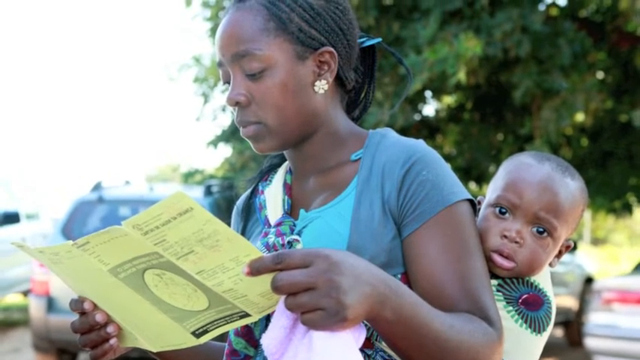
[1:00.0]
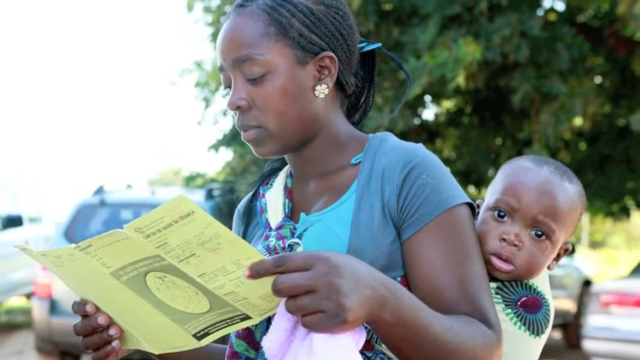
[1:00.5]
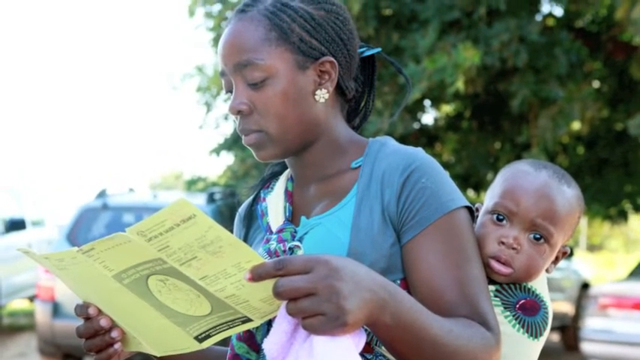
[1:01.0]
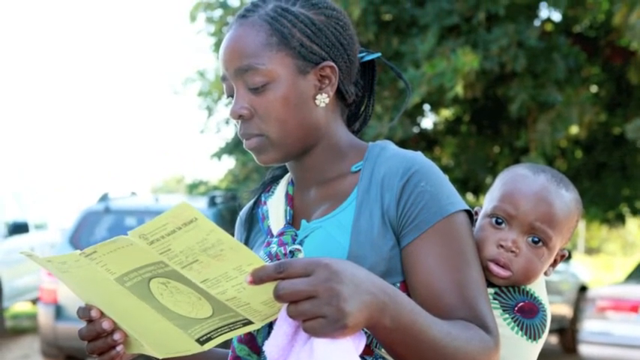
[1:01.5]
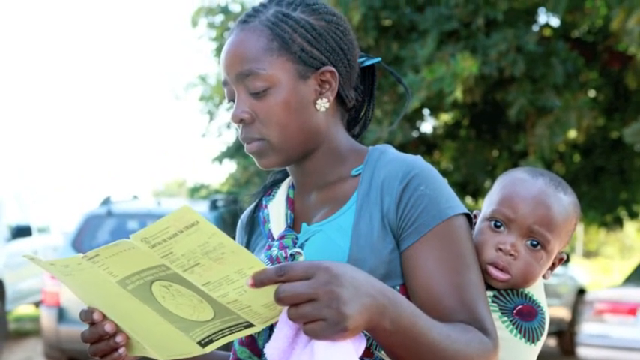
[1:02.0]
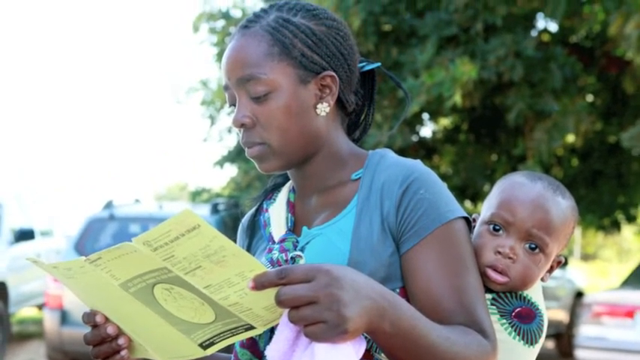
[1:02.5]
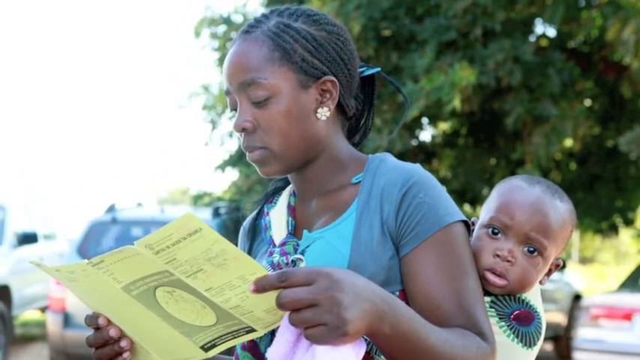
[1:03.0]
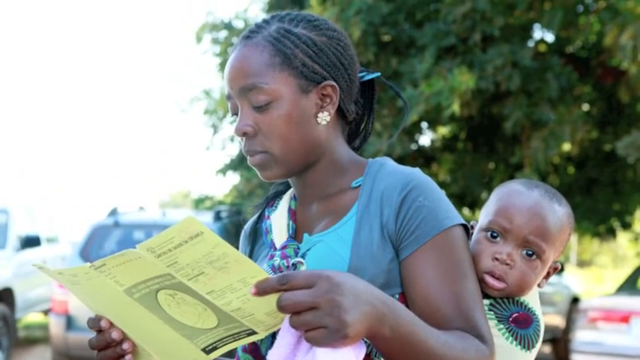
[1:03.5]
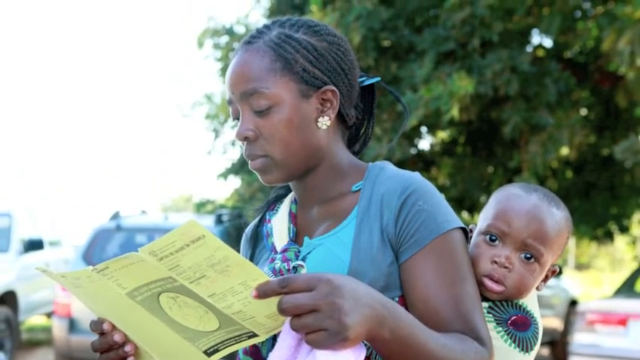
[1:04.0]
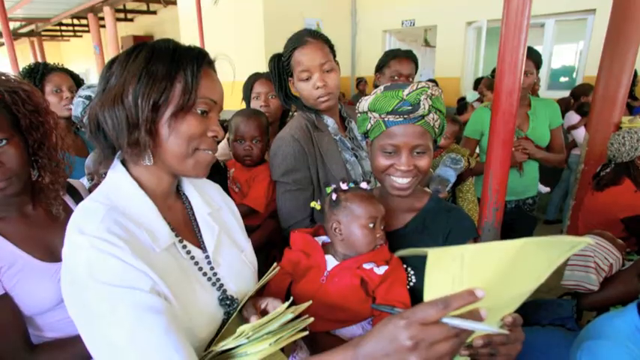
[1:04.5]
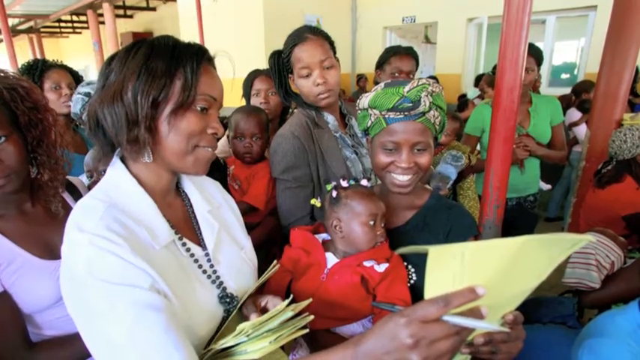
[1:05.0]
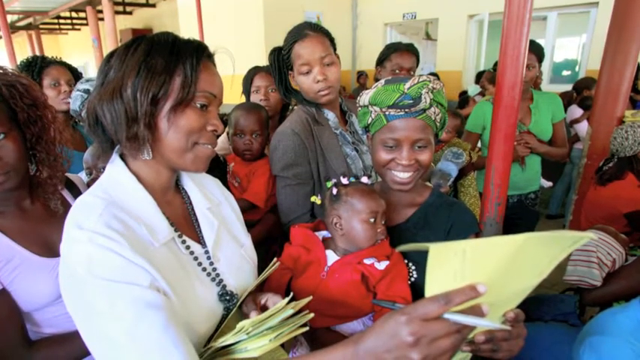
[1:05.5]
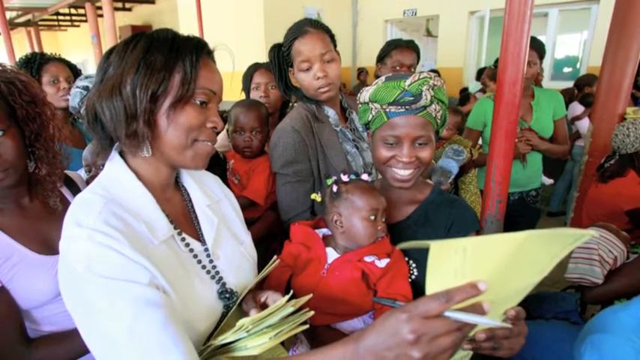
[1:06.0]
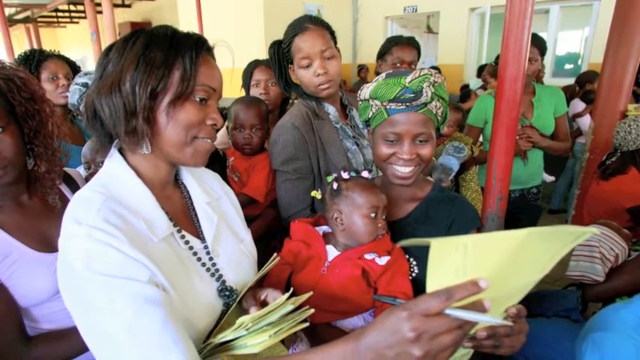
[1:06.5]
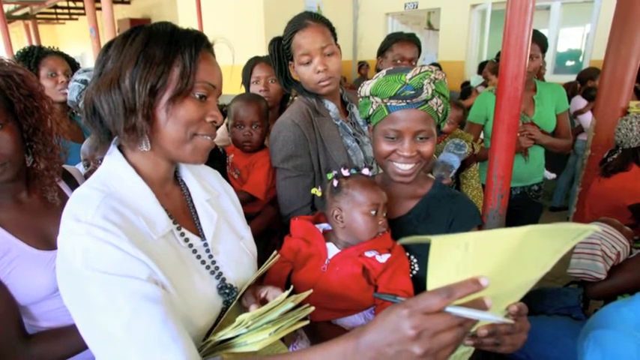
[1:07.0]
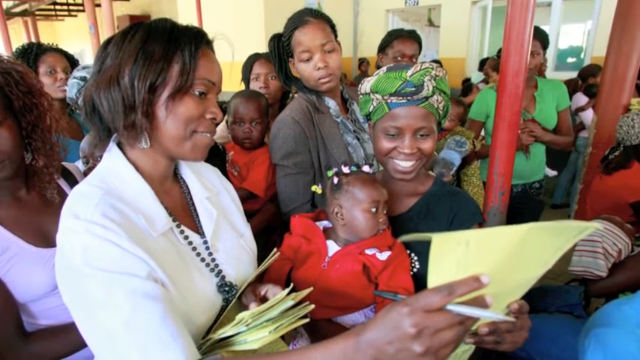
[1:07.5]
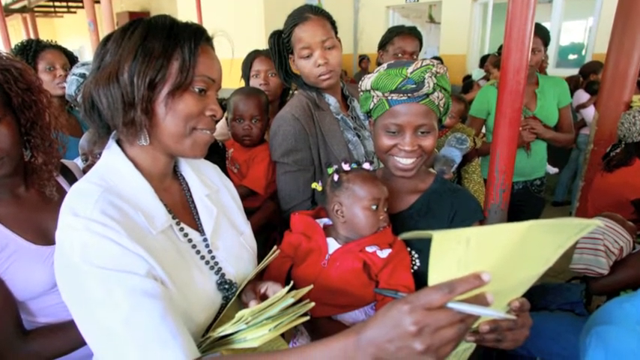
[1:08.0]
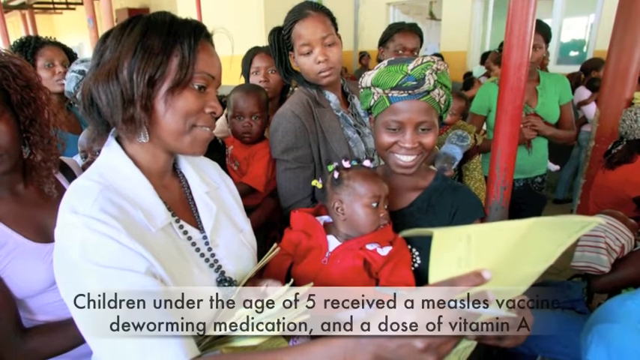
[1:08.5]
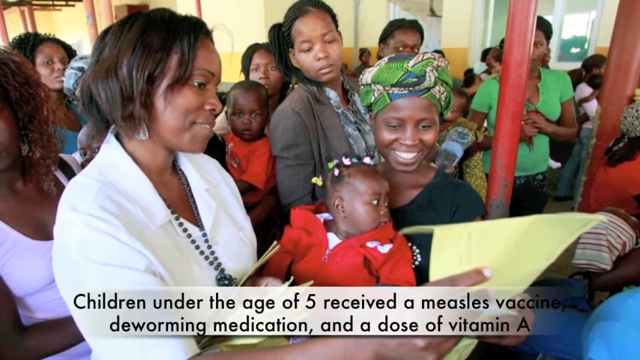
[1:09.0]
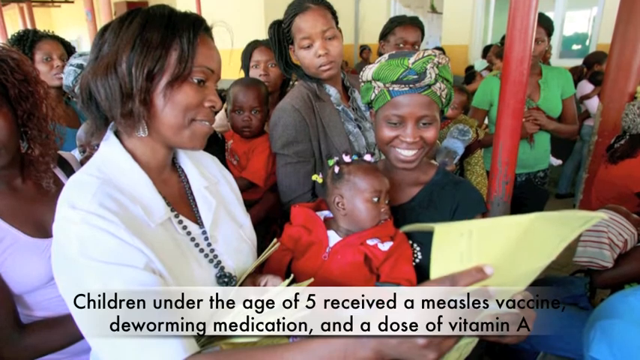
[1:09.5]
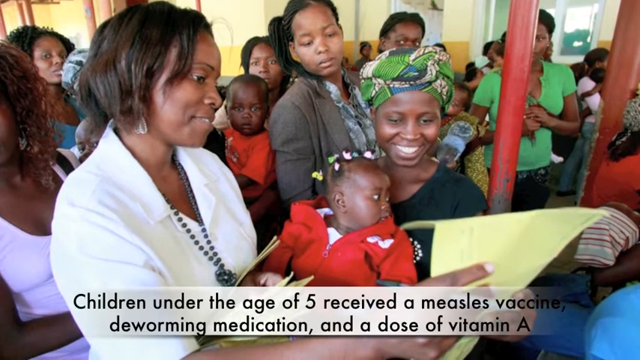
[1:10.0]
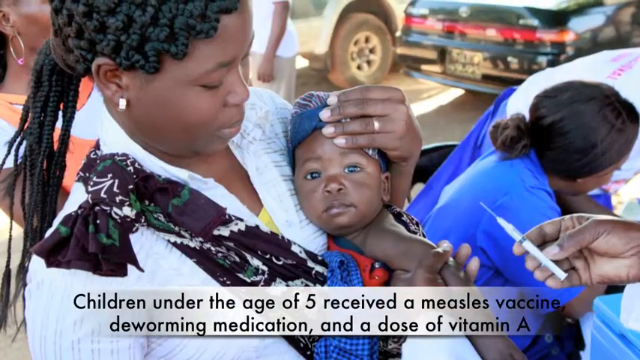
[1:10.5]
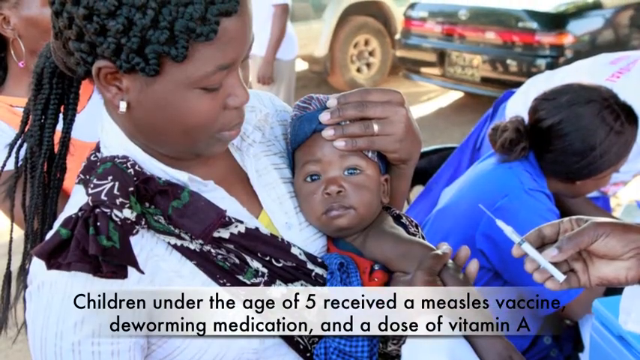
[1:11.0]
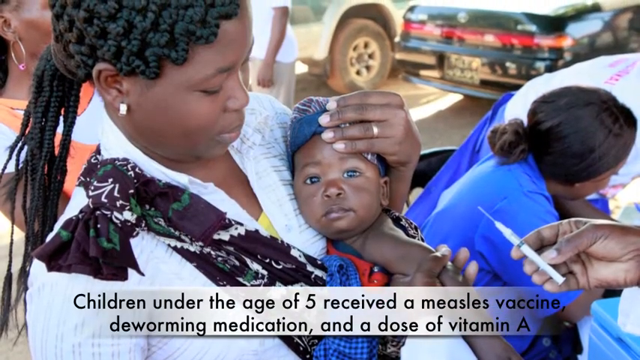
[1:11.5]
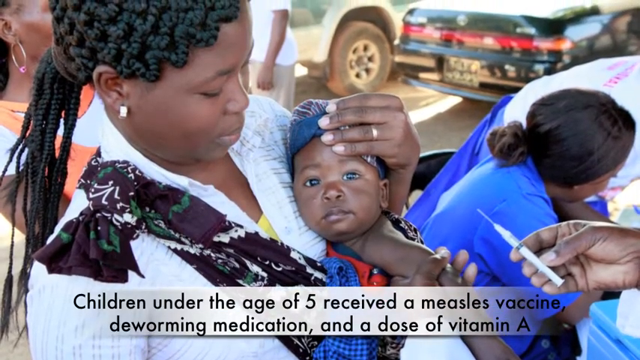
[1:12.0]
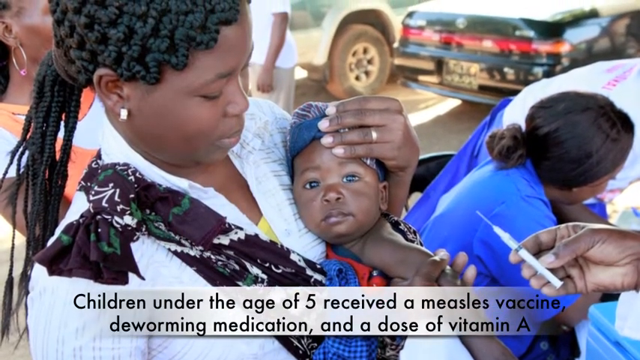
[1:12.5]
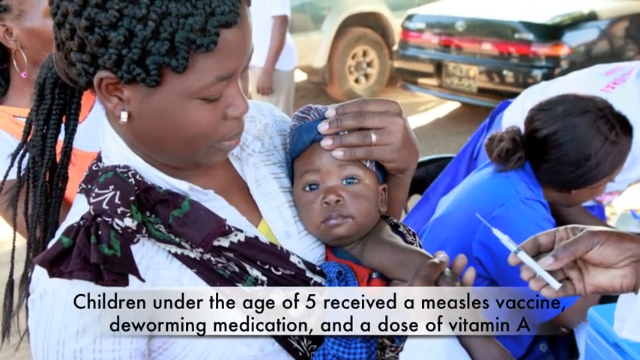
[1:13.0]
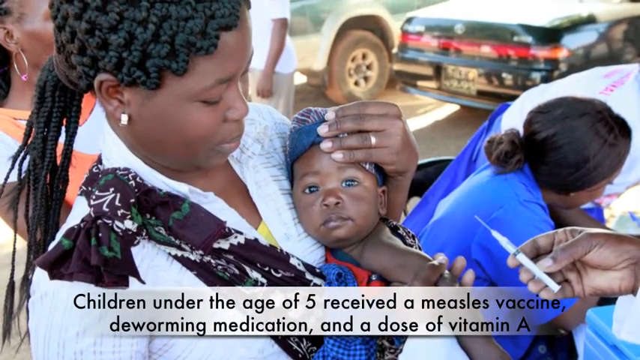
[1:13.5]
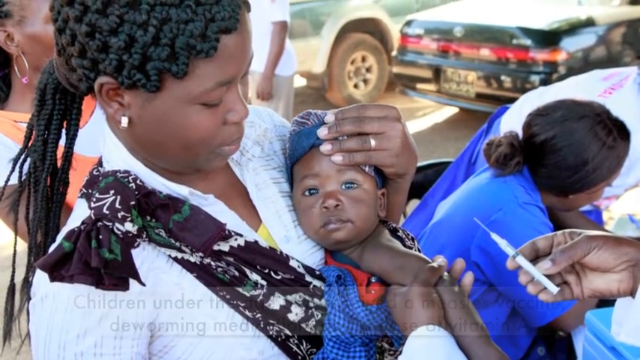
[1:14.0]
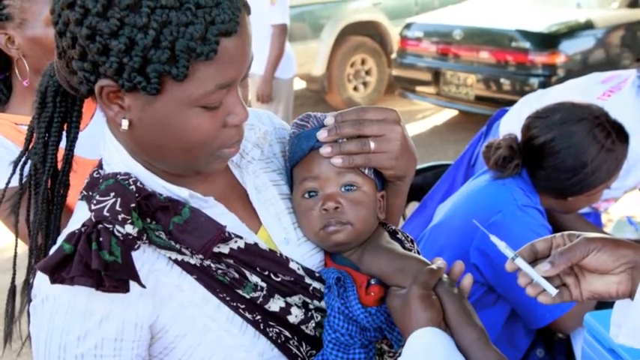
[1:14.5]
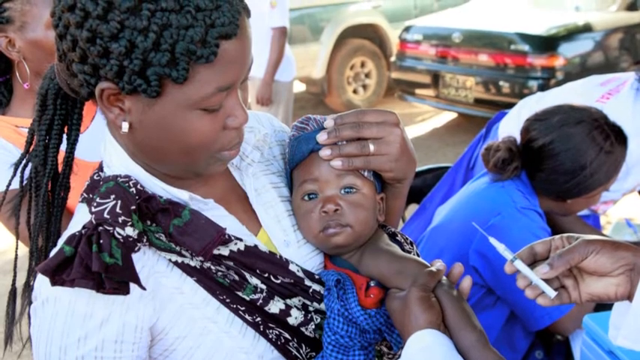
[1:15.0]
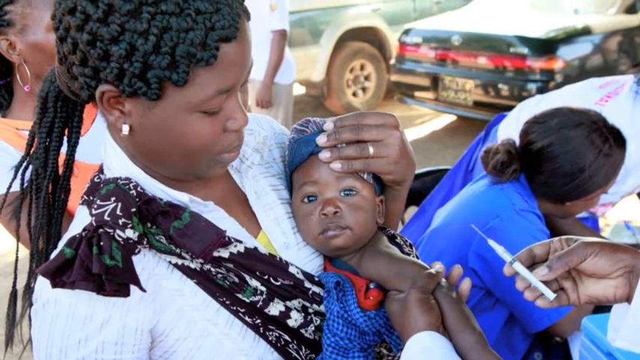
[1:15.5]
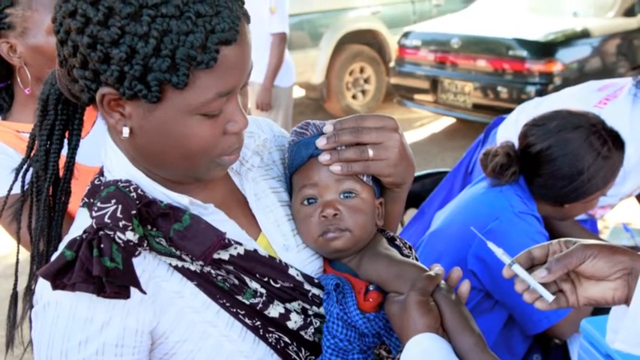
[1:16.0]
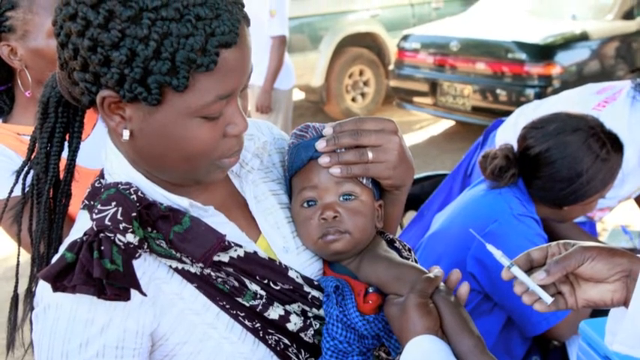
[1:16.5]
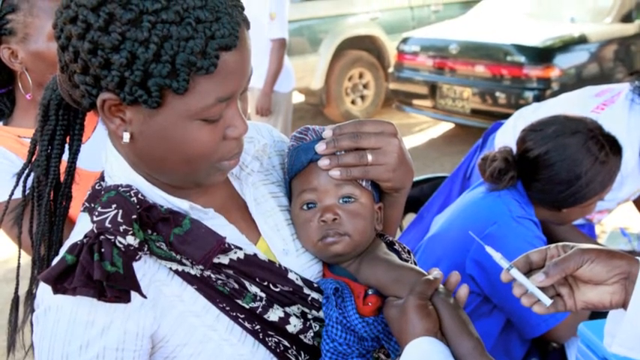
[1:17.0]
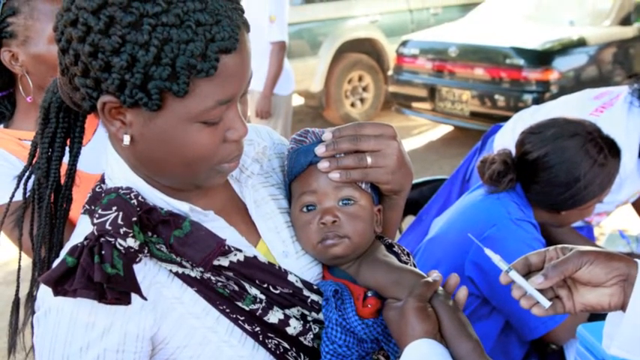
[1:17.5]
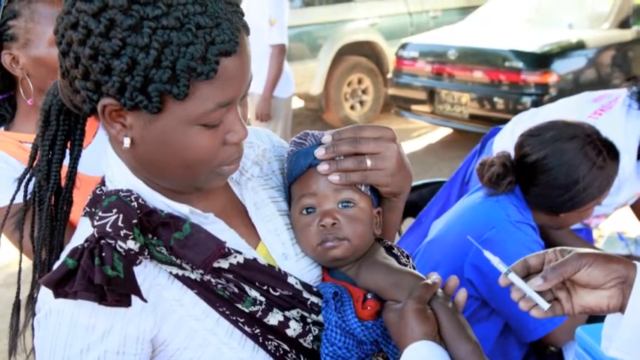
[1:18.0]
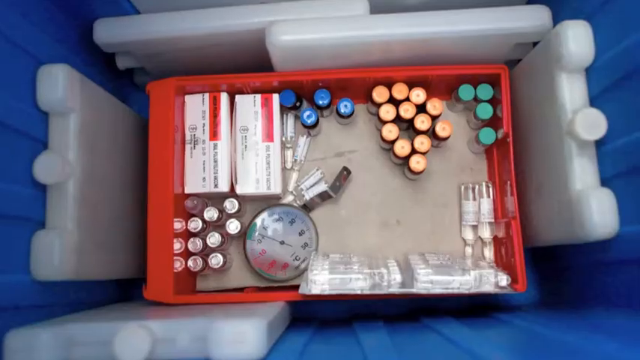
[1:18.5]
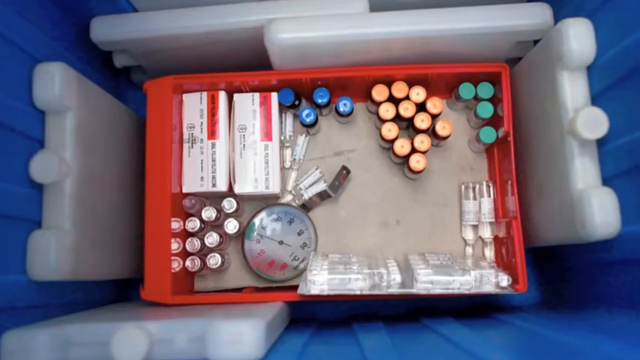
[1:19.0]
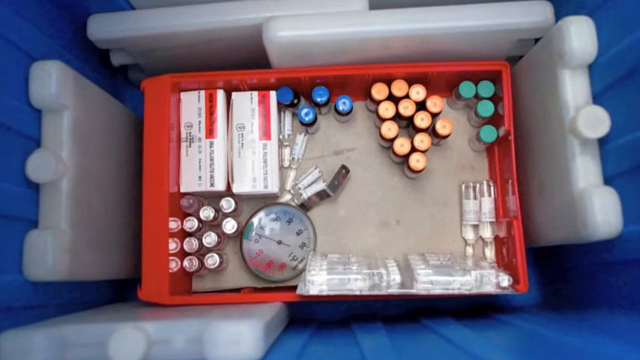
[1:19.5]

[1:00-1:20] More still images follow. The first shows a woman standing outdoors, facing toward the left-hand side of the screen, with a baby under one year old in a backpack on her back. The baby's head is turned so he stares straight toward the camera. The woman is reading a yellow leaflet. The camera slowly zooms out and up. The second image shows some sort of waiting room, with a large crowd of people sitting in rows of chairs. The focus is on a woman in a white suit who is also holding and reading a yellow leaflet. In her lap is a girl in a red coat whose body faces the camera while her head is turned to look off to the right. A caption in a white translucent text box at the bottom reads "children under the age of five receive a measles vaccine, deworming medication, and a dose of vitamin A." The third image shows a different woman holding a baby against her chest, her hand on the baby's head as she stares down at the baby. Off to the right of the screen, a hand holds a measles vaccine. The same caption is visible beneath this image, and the camera zooms out and up. The final picture, viewed from straight overhead, shows a box containing doses of vaccine, with vials with orange caps, vials with blue caps and vials with green caps in the upper right-hand corner, as well as other medications and ice packs surrounding the box.